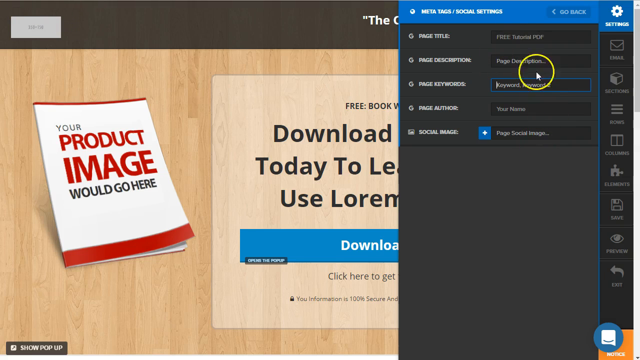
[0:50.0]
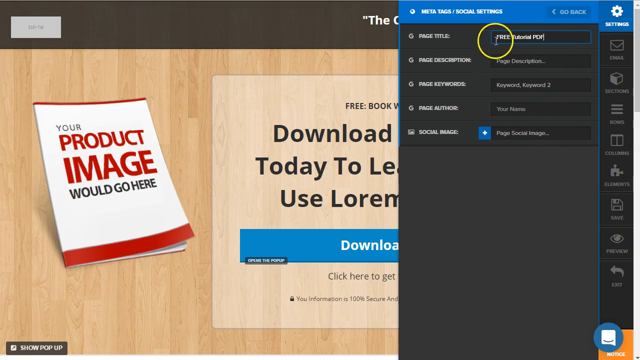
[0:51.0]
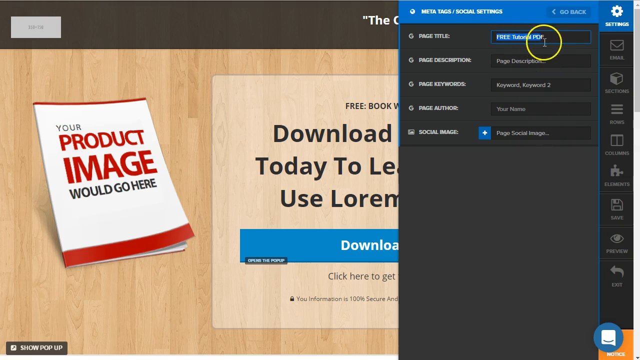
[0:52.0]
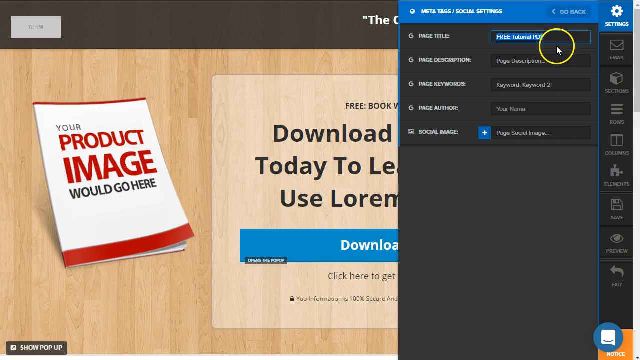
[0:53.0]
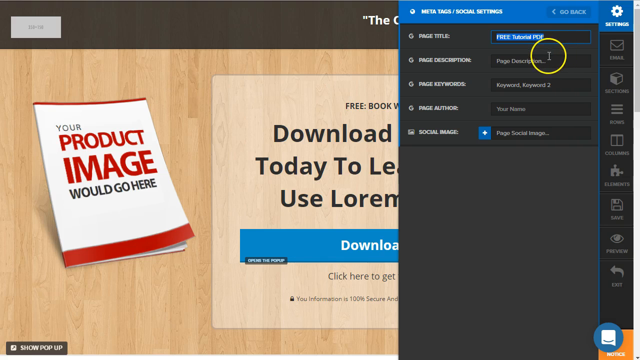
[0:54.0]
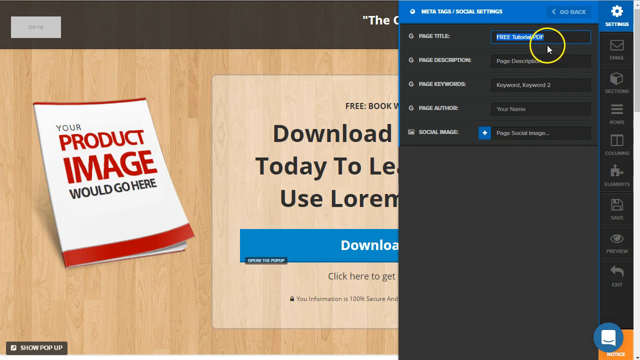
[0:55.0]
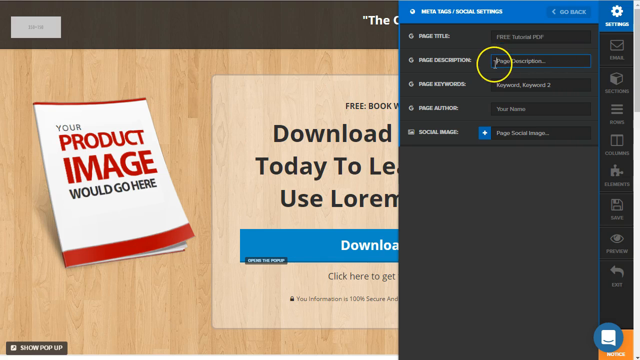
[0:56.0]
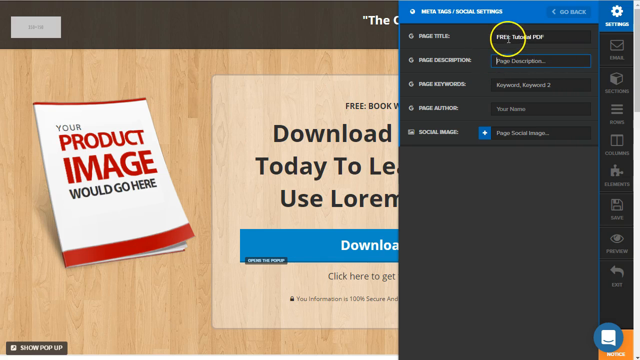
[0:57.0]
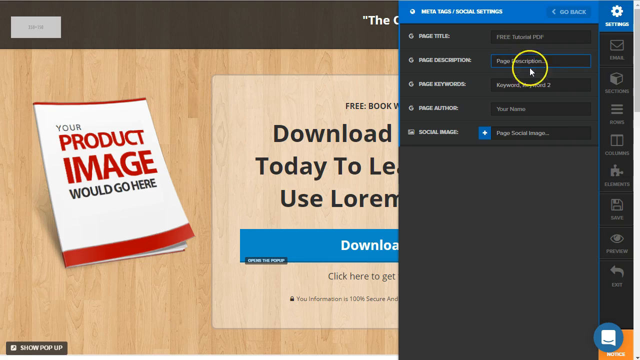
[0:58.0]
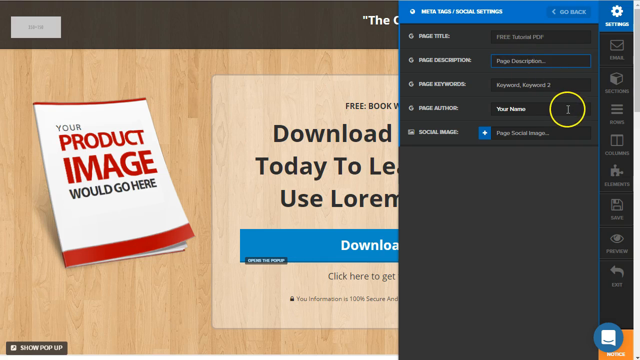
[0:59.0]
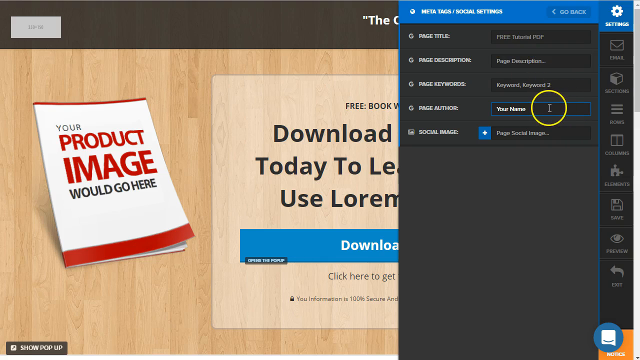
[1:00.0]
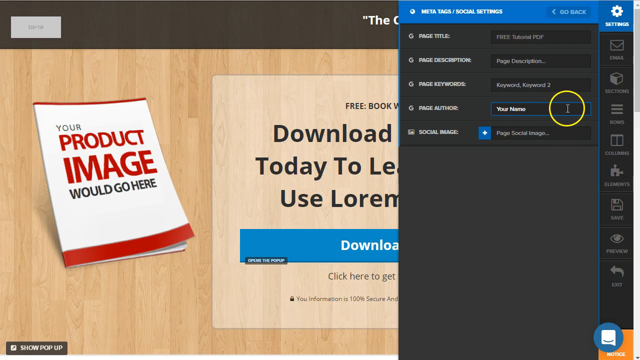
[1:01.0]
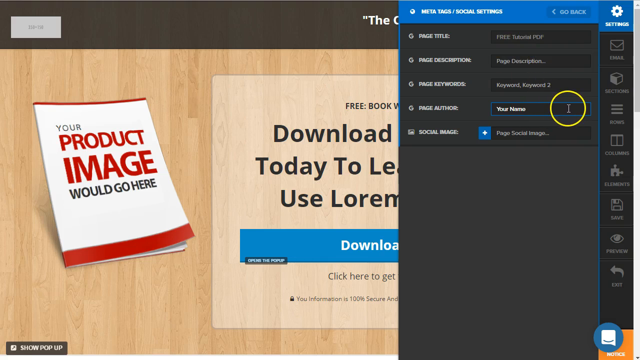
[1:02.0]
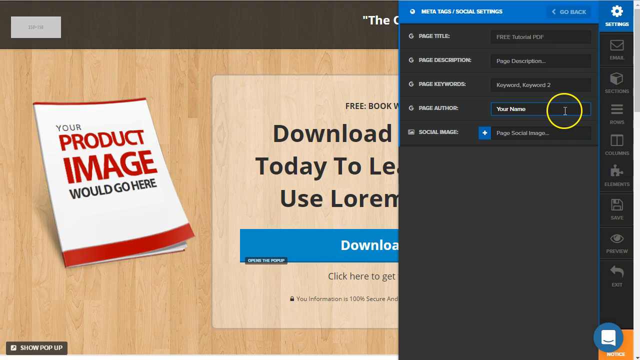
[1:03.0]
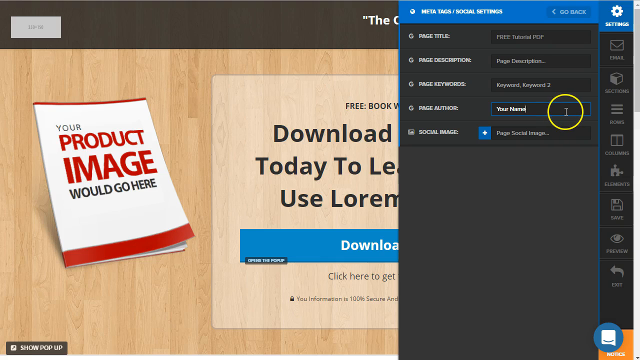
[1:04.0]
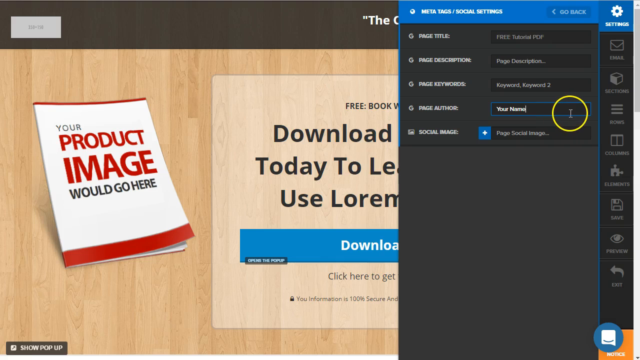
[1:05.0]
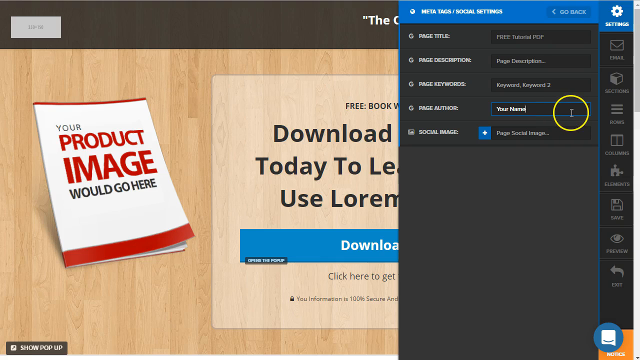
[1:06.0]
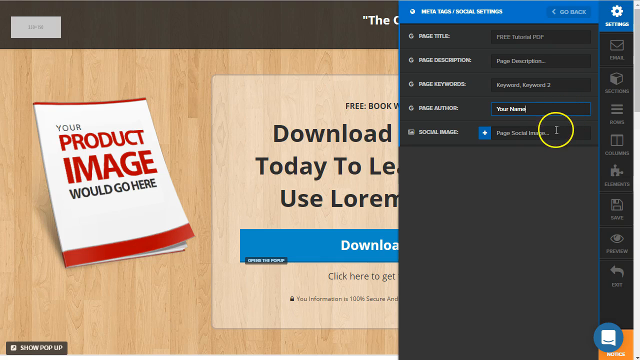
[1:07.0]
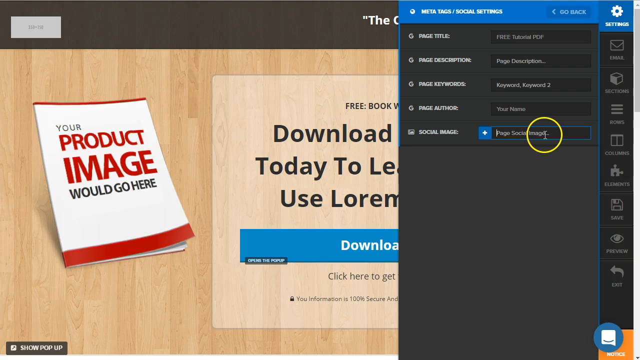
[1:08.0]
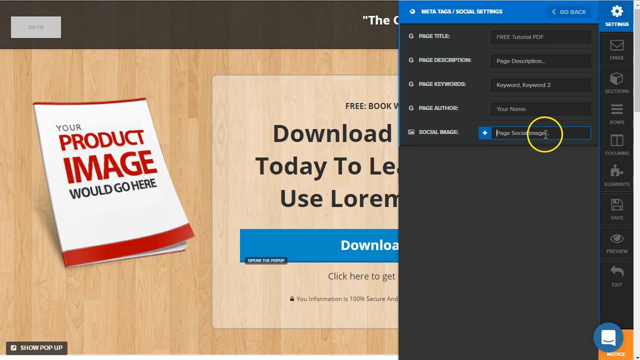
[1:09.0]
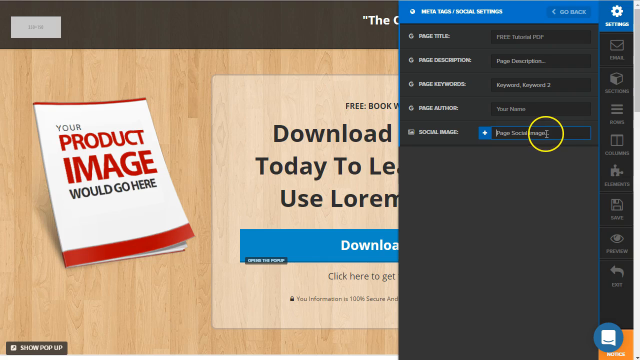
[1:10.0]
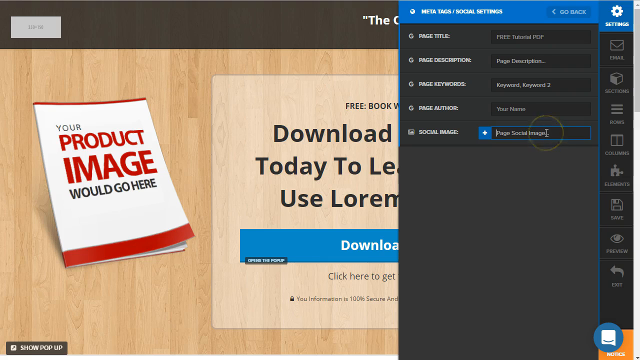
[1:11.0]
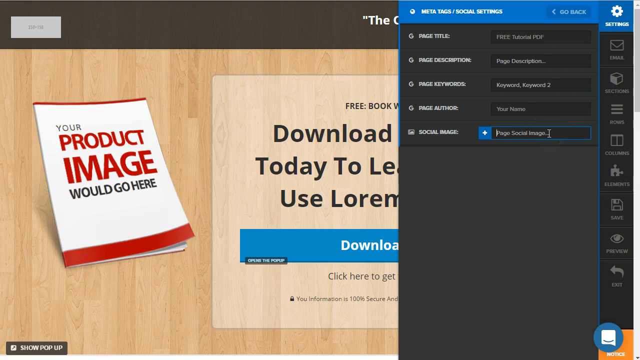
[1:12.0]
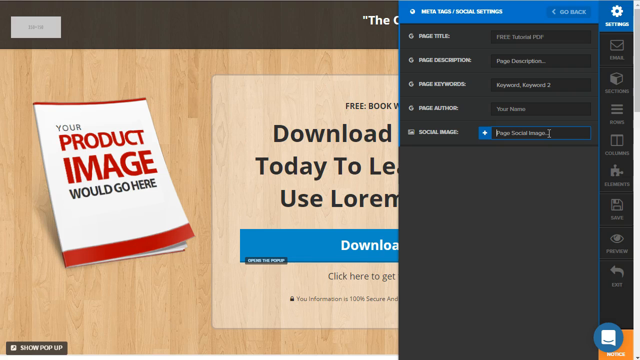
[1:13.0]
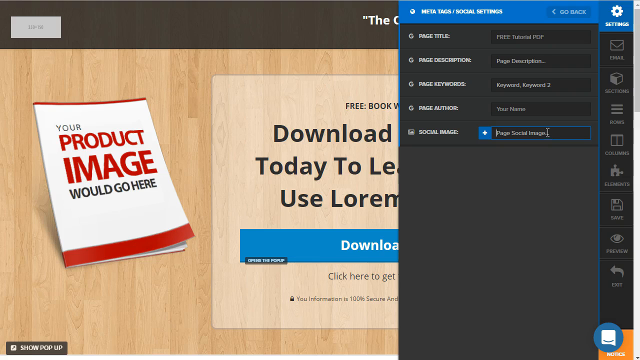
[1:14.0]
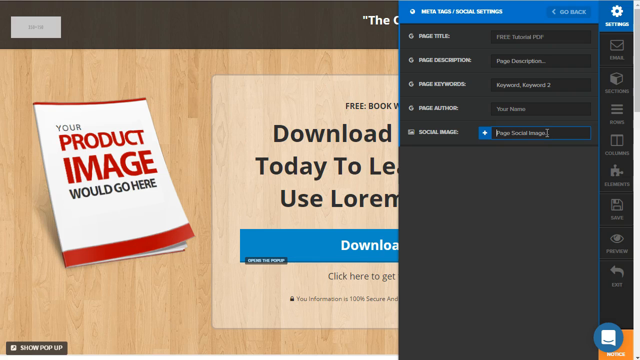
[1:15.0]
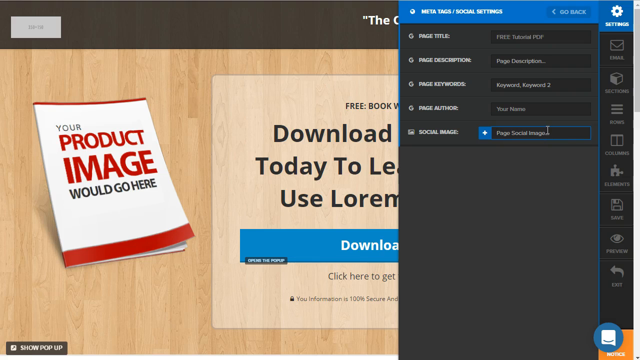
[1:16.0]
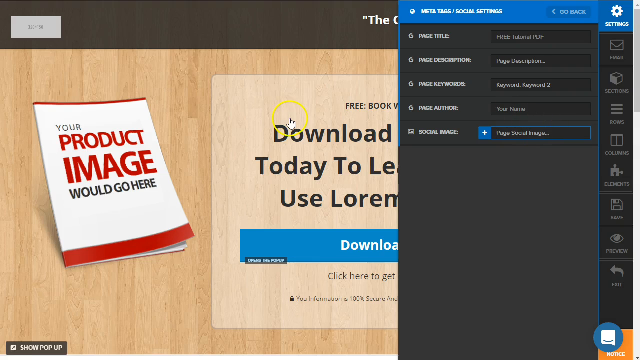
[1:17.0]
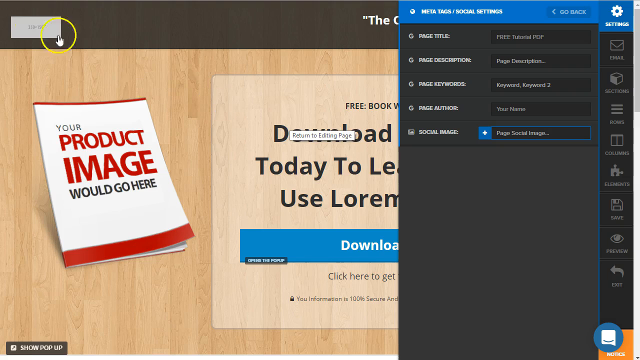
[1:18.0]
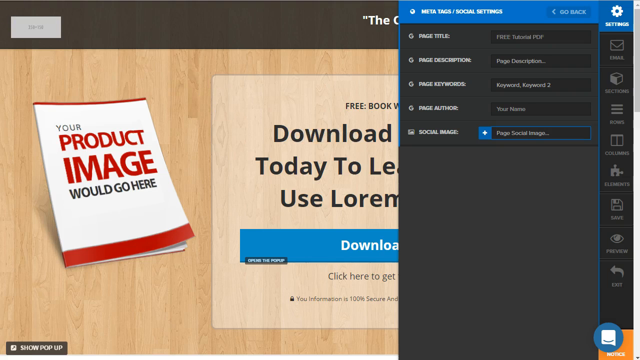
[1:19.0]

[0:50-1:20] Someone is using a website on a computer, moving the cursor, which is inside a yellow circle, over the right side of the page to make a selection. On the left side the website shows a white book with red writing that says "your product image would go here," with a red border on the top and bottom. An area tells the viewer to download their program and get a free book, with a blue download space. Icons along the right side of the screen are very light, like a gray, and barely visible.